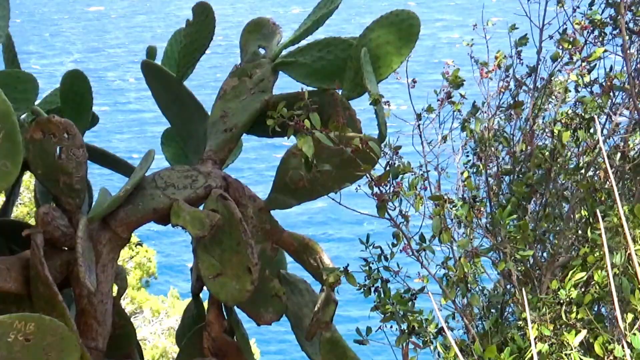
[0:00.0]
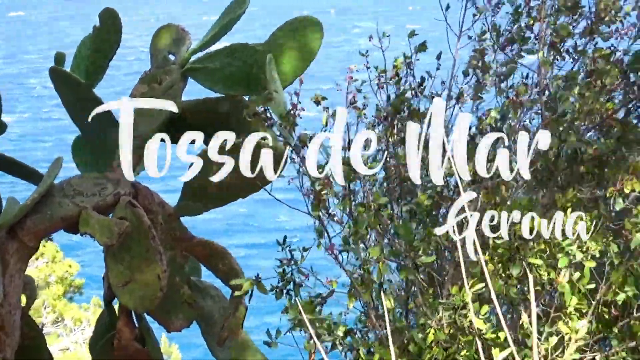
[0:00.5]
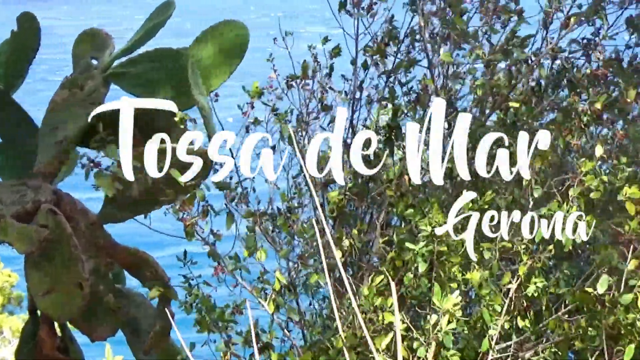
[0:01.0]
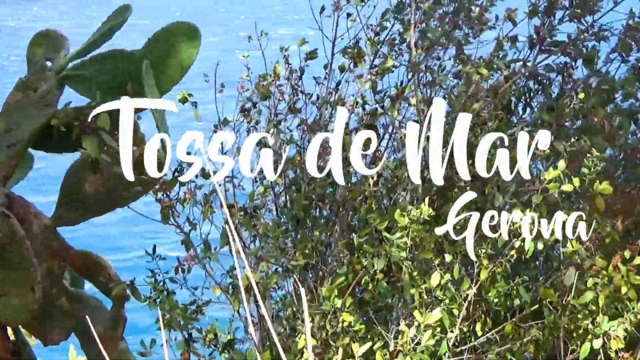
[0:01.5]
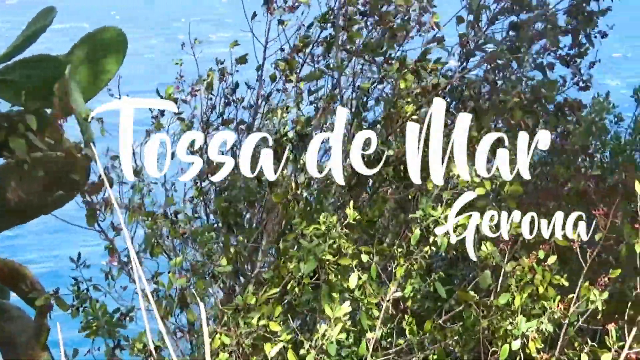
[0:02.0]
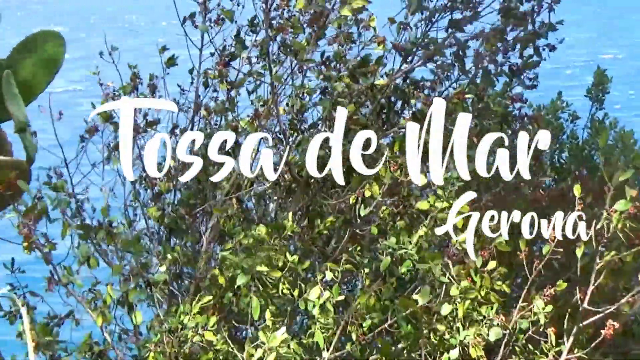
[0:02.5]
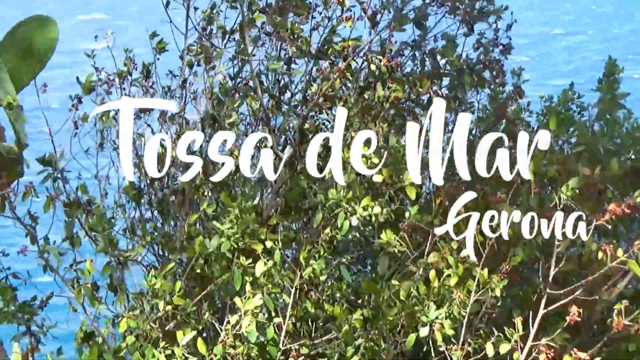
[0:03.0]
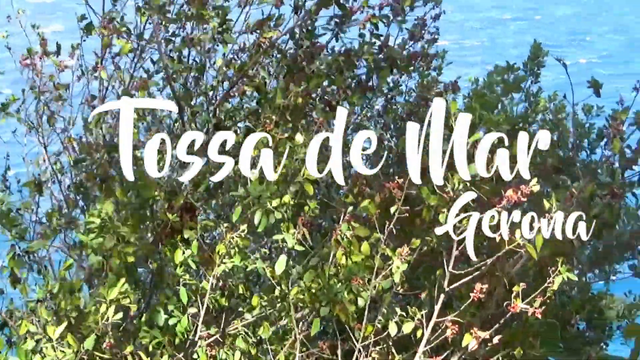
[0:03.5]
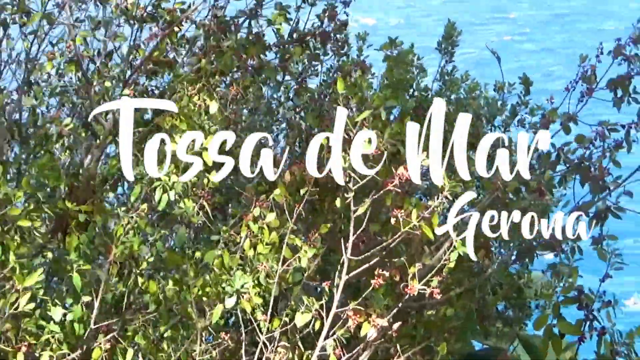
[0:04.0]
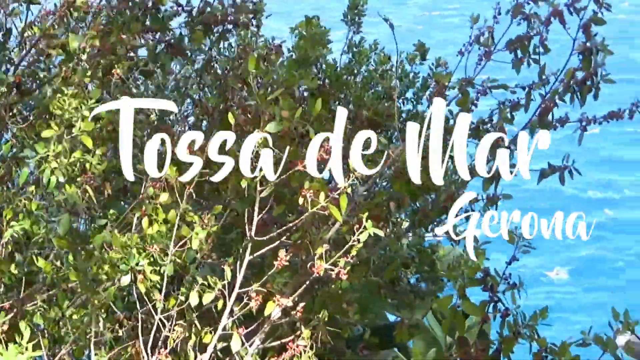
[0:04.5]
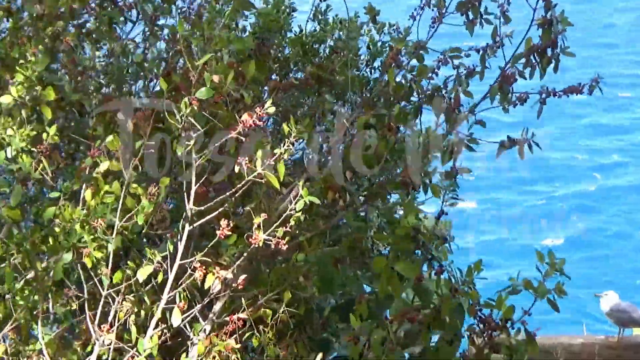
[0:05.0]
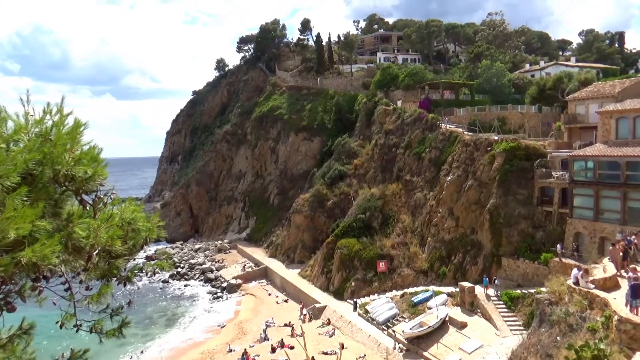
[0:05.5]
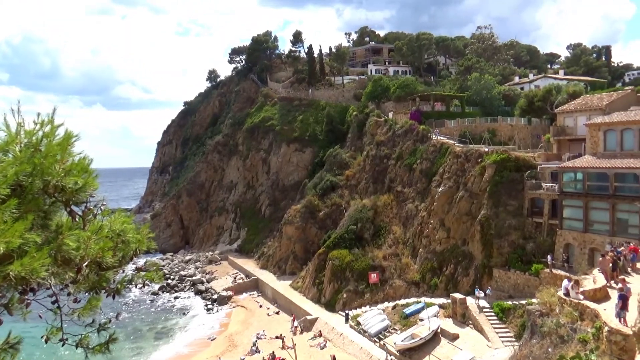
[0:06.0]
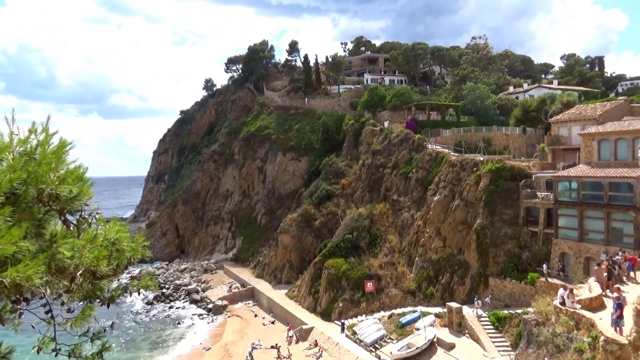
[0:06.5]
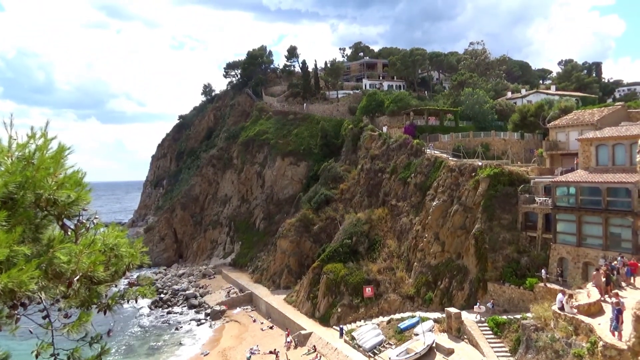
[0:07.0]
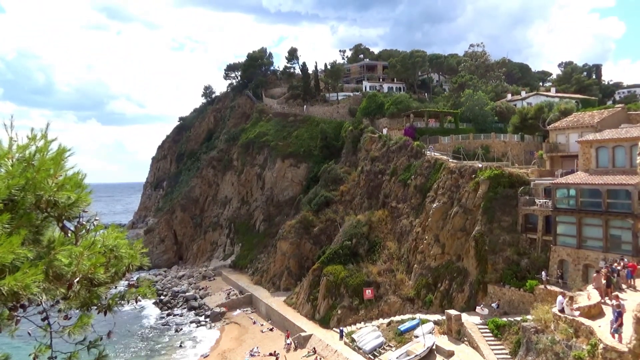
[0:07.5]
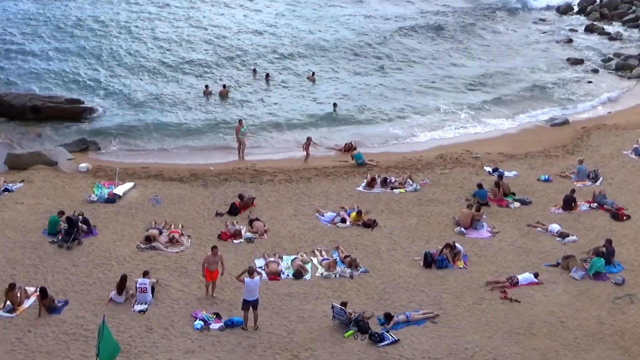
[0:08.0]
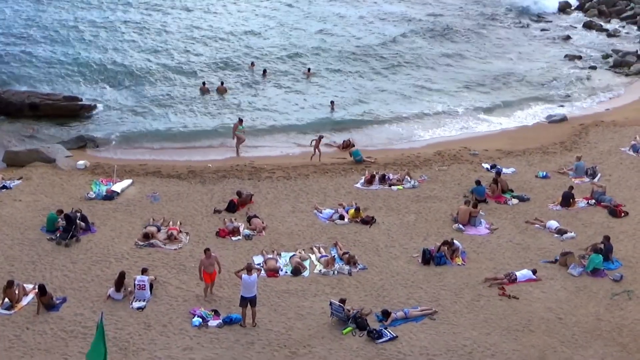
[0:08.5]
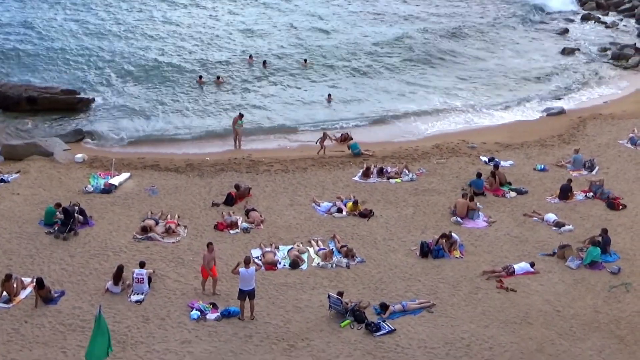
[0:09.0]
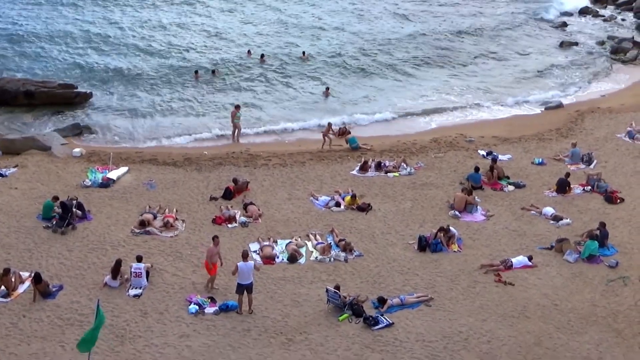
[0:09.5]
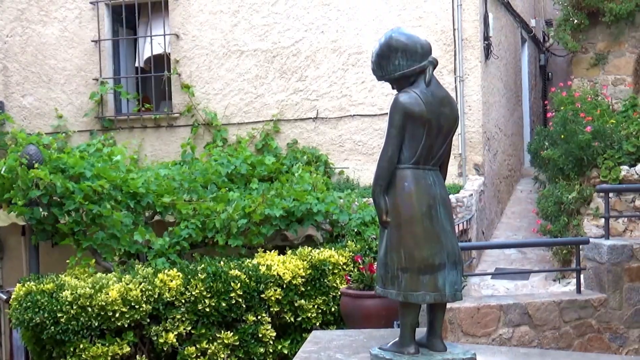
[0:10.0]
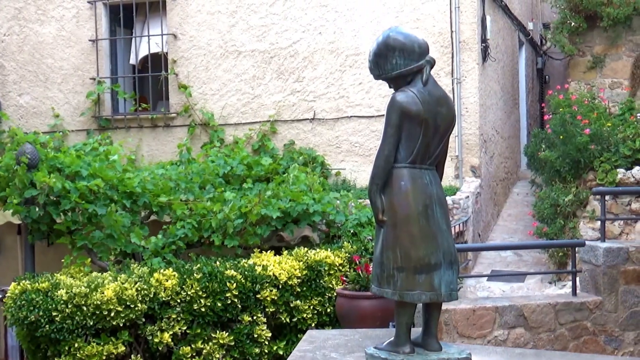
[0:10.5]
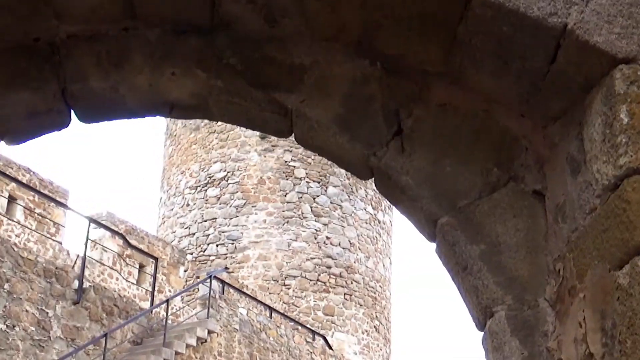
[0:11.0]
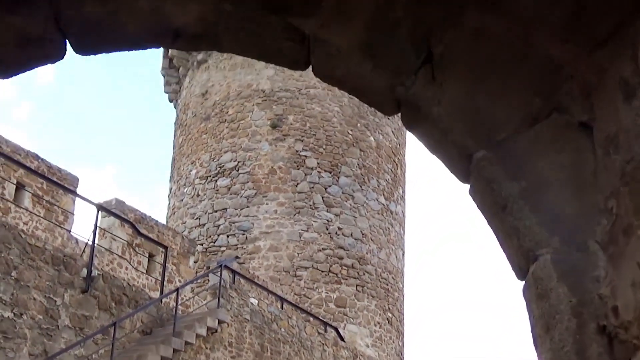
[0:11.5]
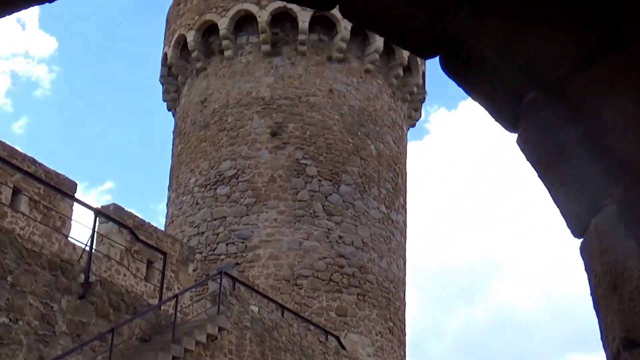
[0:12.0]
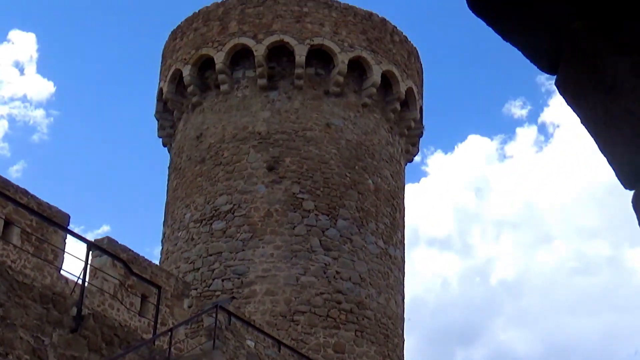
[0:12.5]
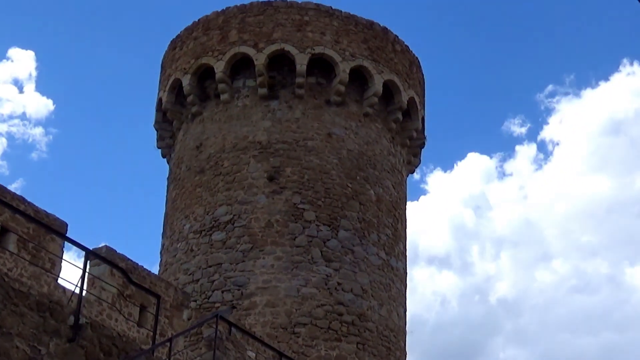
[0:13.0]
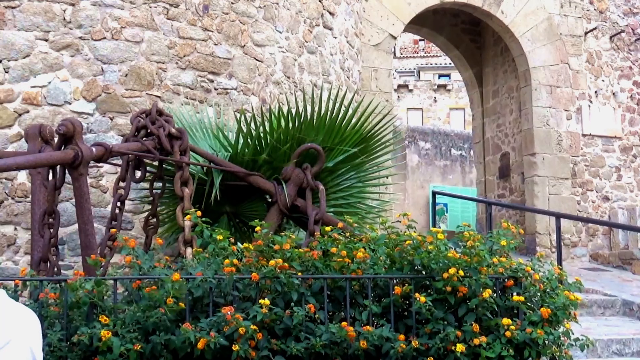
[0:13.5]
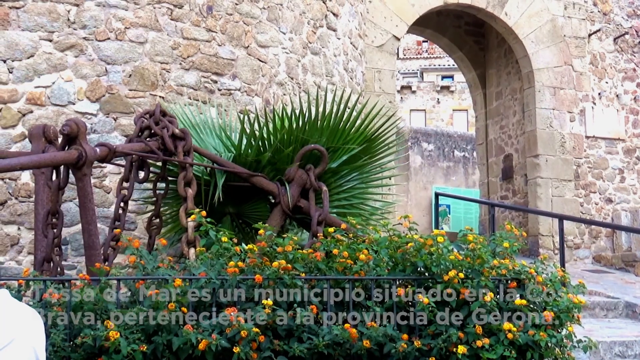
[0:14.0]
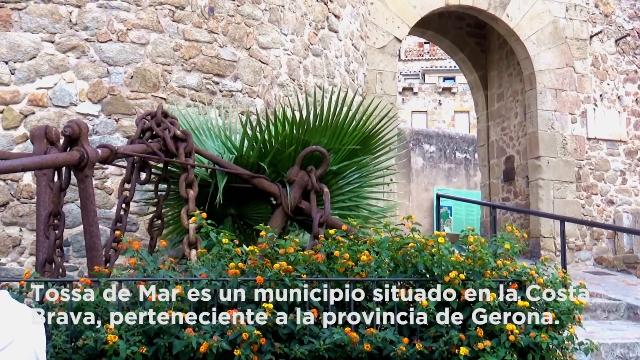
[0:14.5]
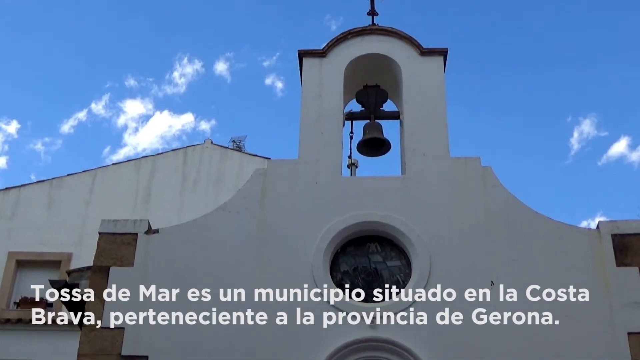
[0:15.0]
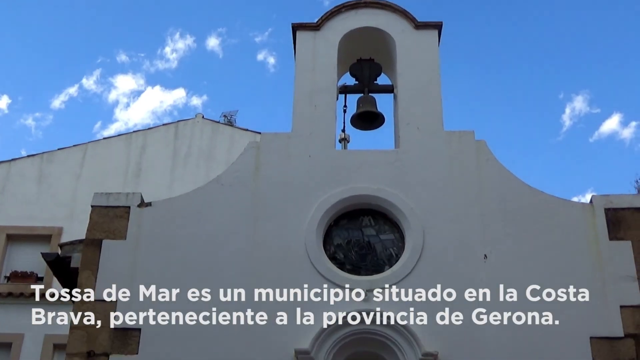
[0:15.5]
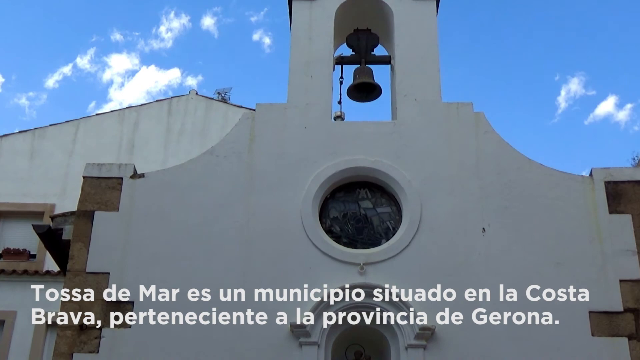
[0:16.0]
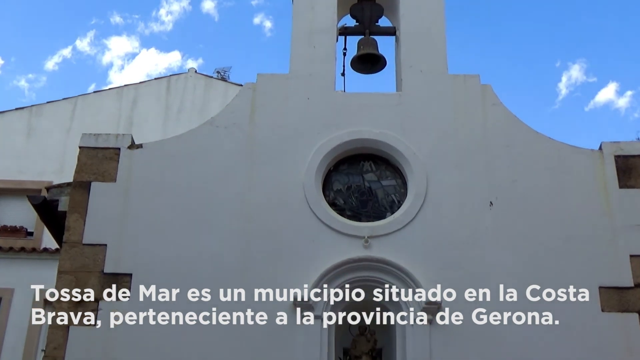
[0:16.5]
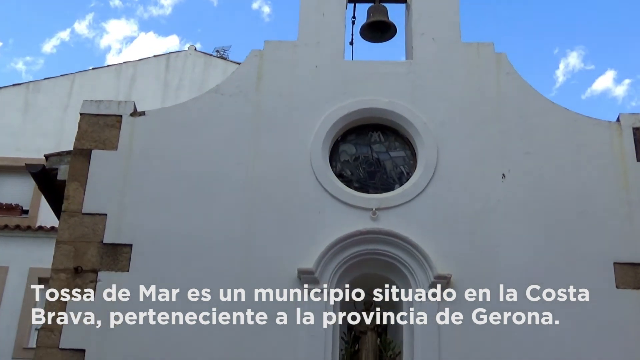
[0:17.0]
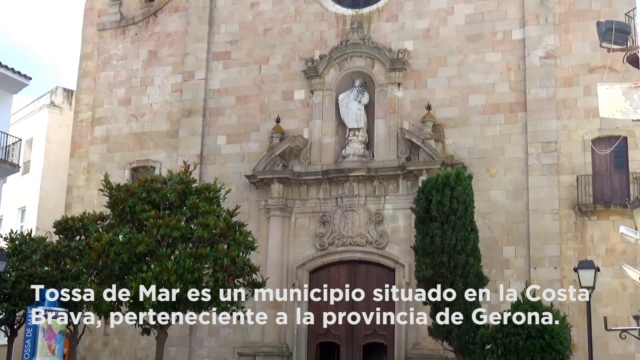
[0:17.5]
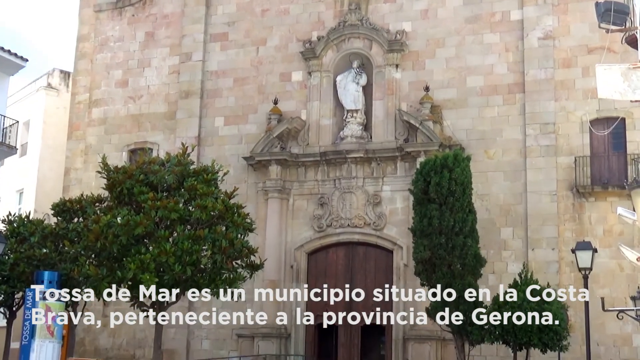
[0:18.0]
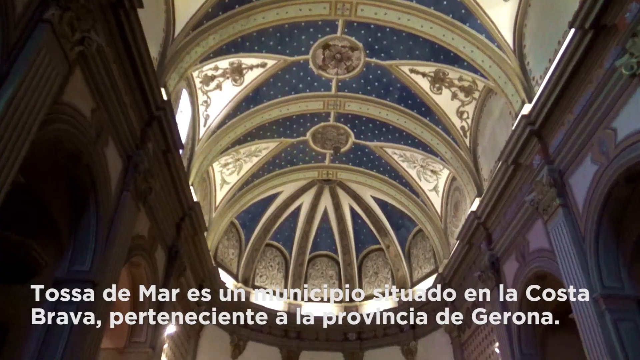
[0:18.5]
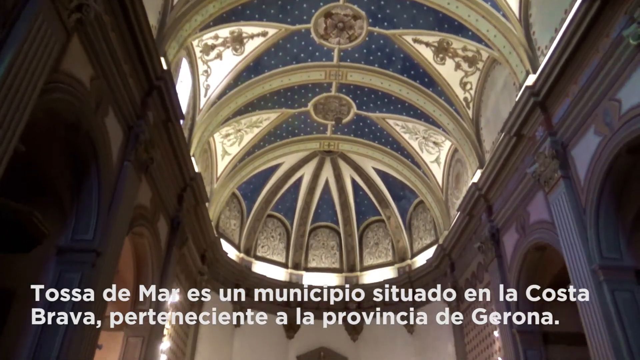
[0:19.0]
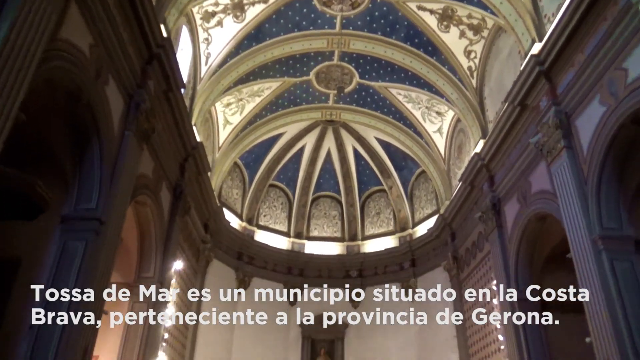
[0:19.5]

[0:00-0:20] The video opens on a green cactus in front of some water, with some other wildlife next to it. The cactus looks very healthy and appears to be growing in the foreground. The words "Tasa de Mar, Gerona" then appear, over a mountainous area with a building built into the side of a hill. People are on a beach enjoying sunny weather as water laps onto the shore. The shot switches to a brass statue of a little girl in front of some greenery, followed by what looks like a castle turret on a clear, very blue day. It appears to be a tourism ad for Tasa de Mar in Costa Brava and Gerona.